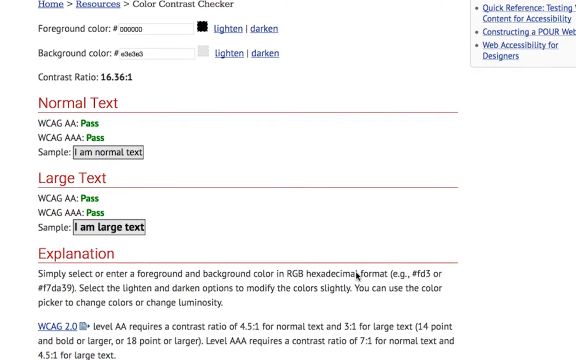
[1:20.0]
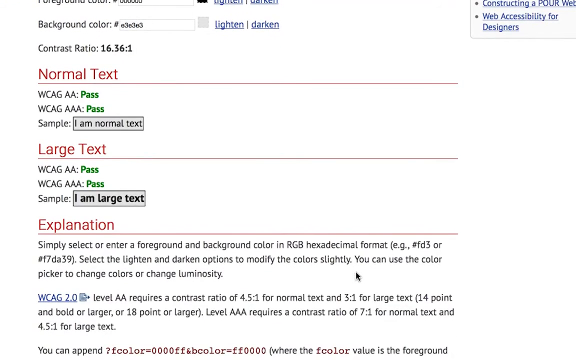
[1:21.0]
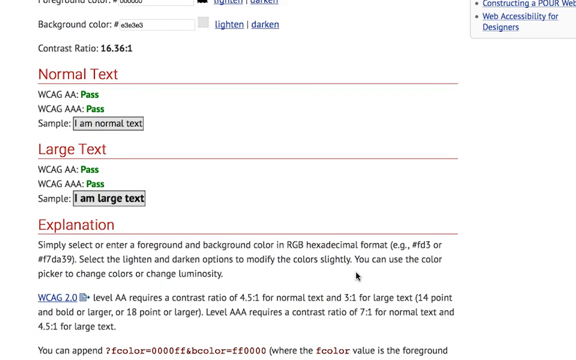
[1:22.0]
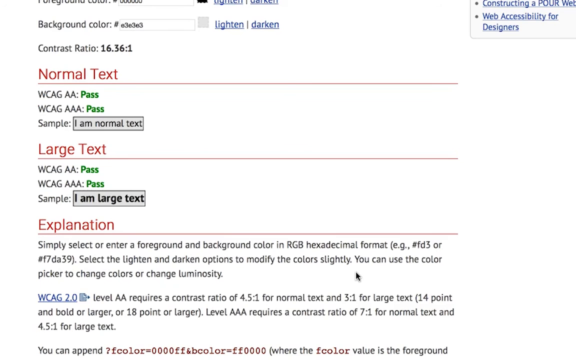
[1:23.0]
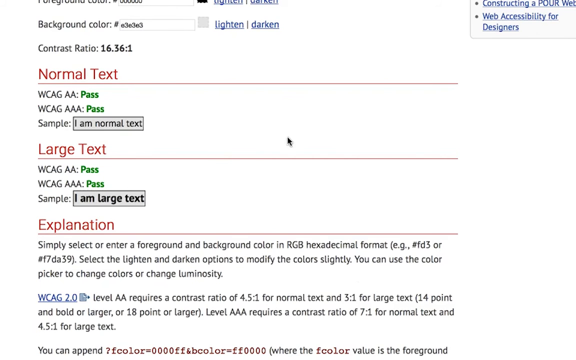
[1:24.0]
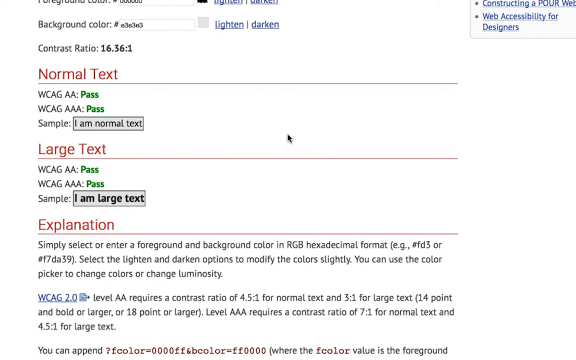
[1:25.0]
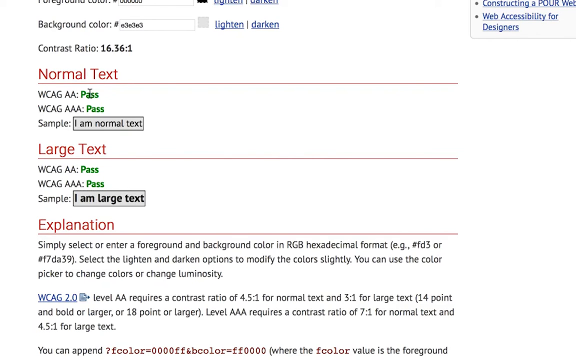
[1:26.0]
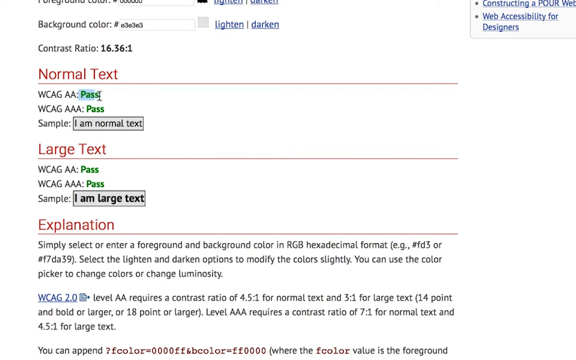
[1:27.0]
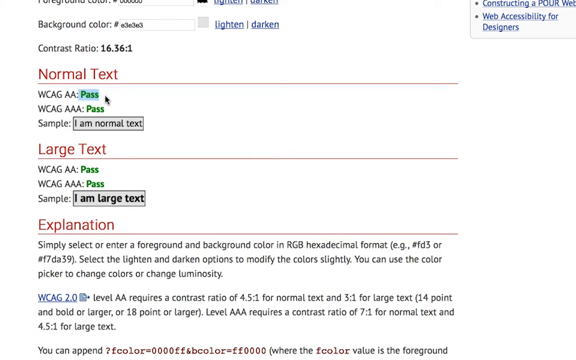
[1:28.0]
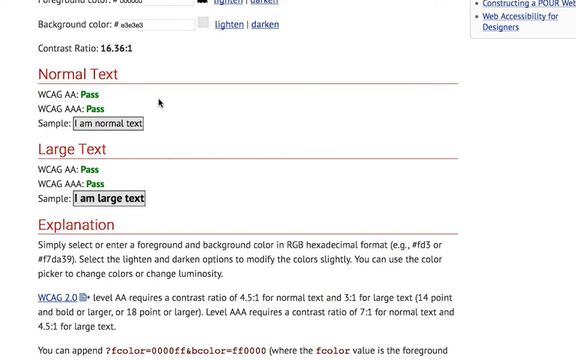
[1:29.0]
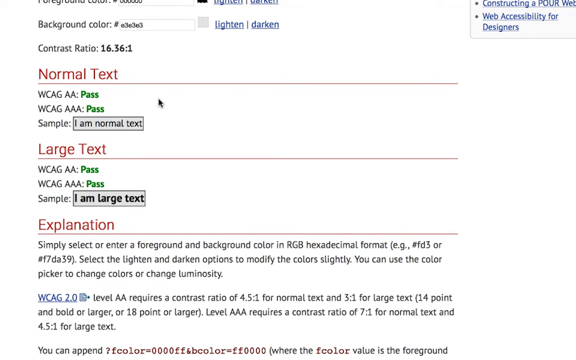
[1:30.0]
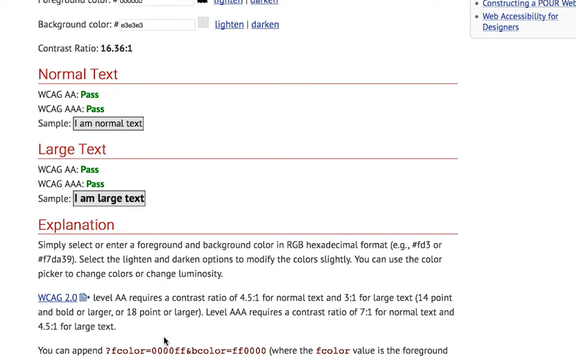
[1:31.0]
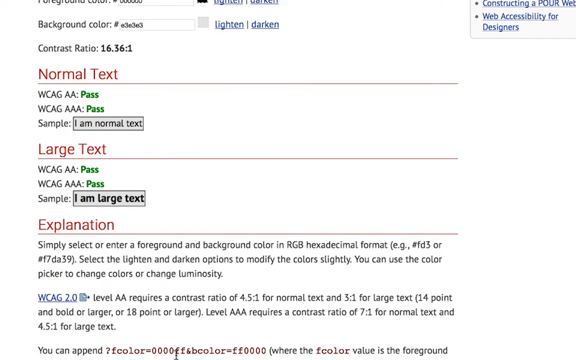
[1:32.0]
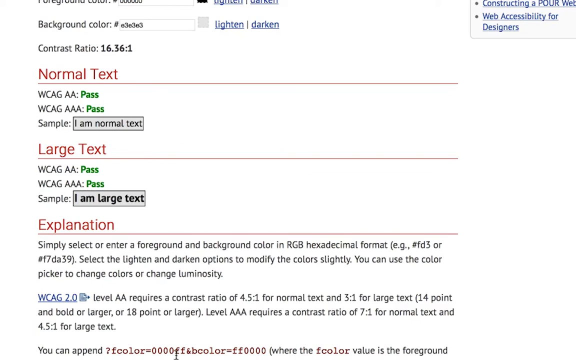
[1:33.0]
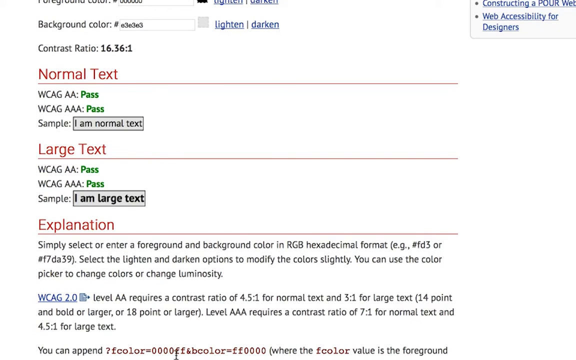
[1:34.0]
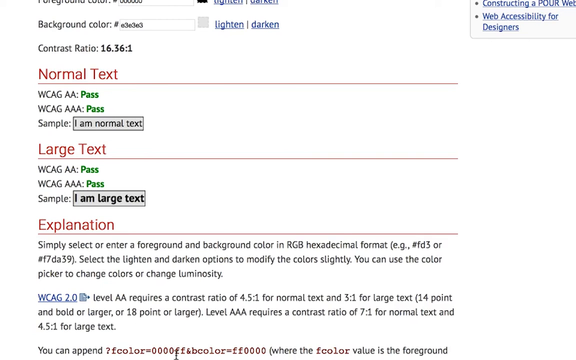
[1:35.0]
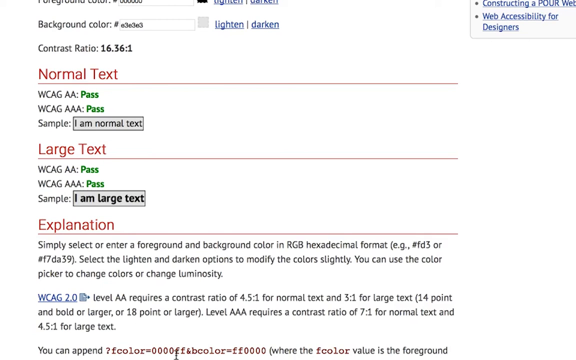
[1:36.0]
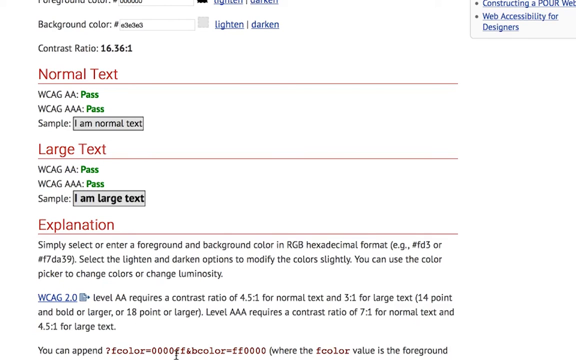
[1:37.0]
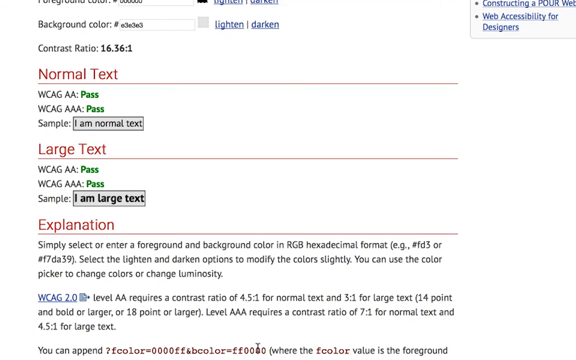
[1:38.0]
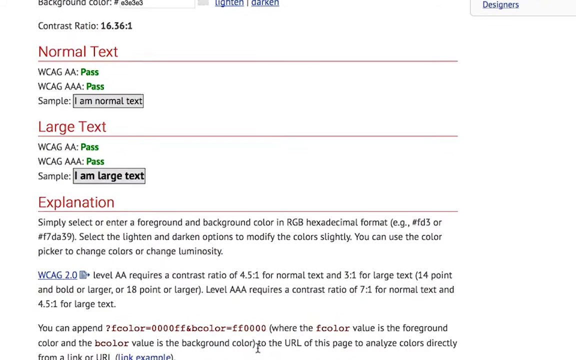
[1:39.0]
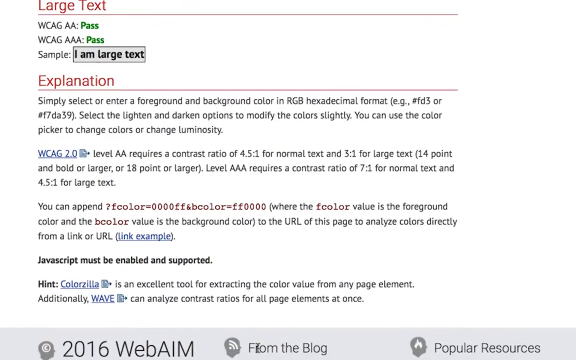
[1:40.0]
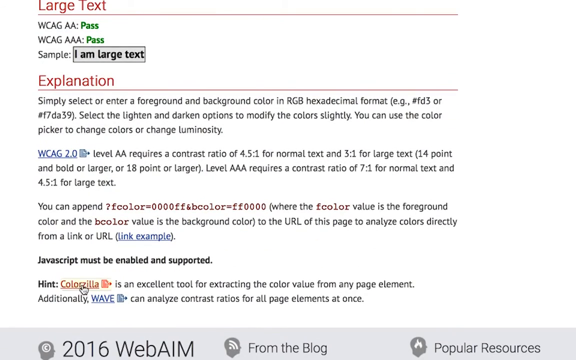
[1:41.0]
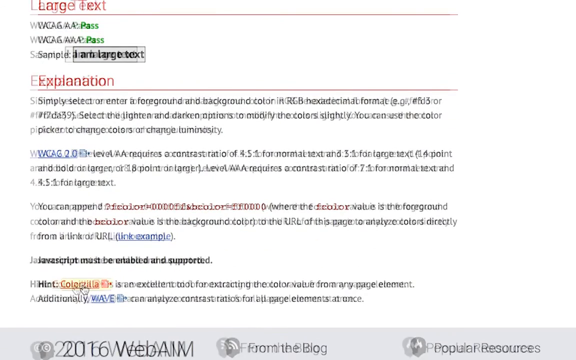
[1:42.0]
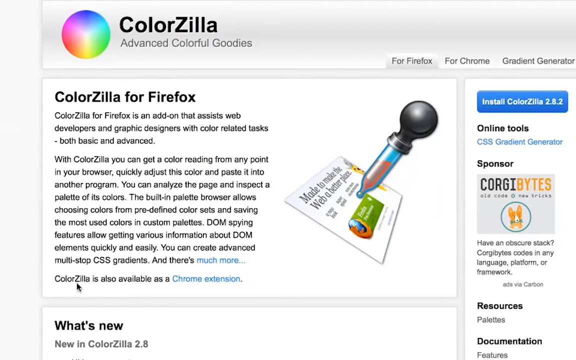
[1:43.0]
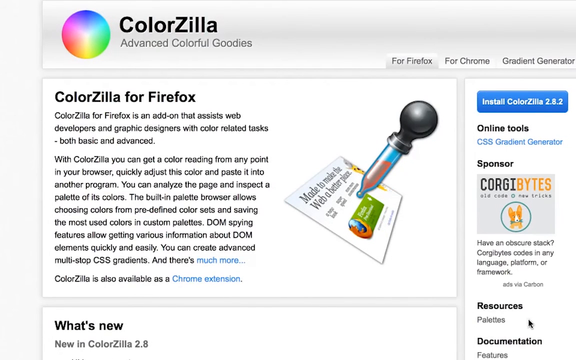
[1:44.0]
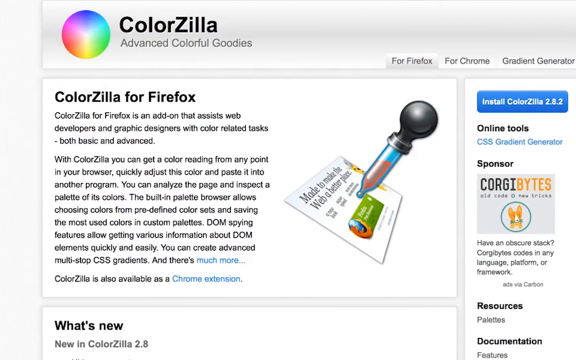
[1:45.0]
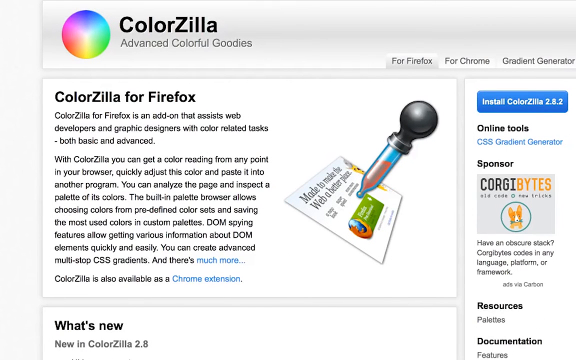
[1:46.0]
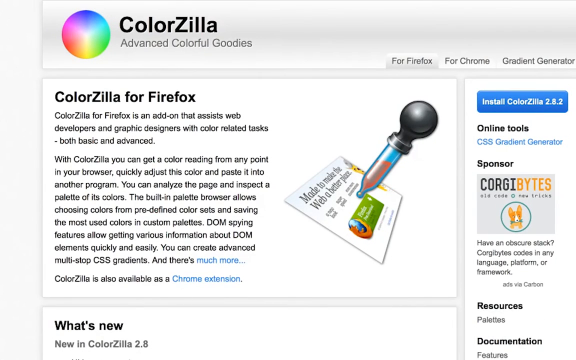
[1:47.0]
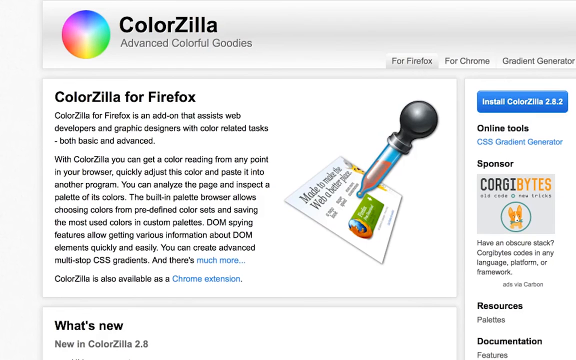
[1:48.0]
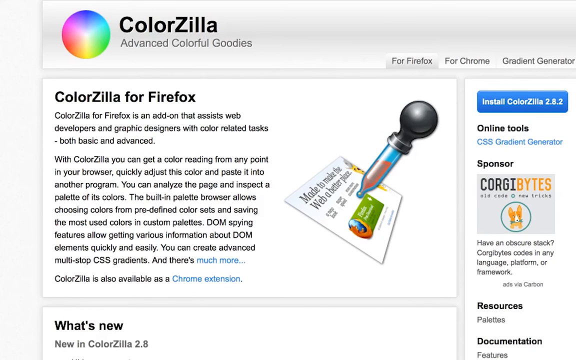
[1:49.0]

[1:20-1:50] The web page shows a section for lightening or darkening color contrast, along with sections for normal text, large text, and an explanation. The cursor moves over and highlights the word "pass" beneath normal text. The page is scrolled up, and a link for ColorZilla for Firefox is clicked. That page appears, with a circle of vibrant rainbow colors at the top as its logo and text reading "ColorZilla, Advanced Colorful Goodies." There are three tabs at the top: Firefox, which is open, Chrome, and Gradient Generator. There is an installation button, a description of ColorZilla for Firefox, and a section for what's new. In the middle is an image of a bulb, a dropper, and the Mozilla Firefox logo, on what looks like a business card with more text, next to the section describing ColorZilla for Firefox.